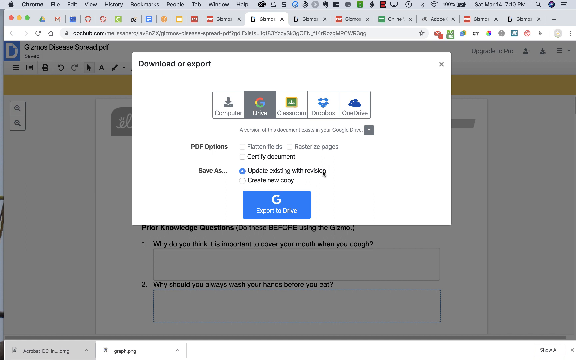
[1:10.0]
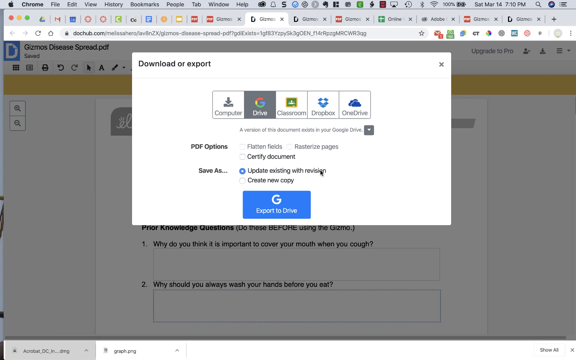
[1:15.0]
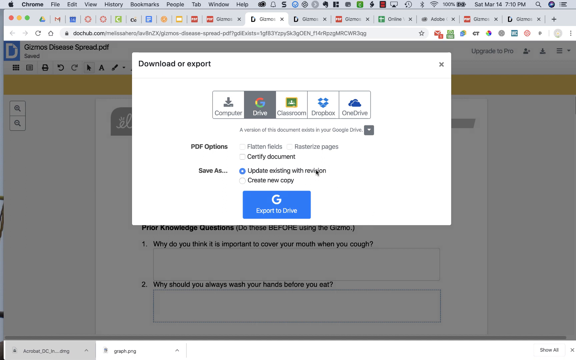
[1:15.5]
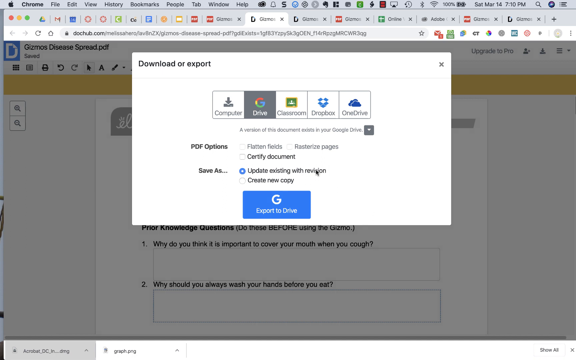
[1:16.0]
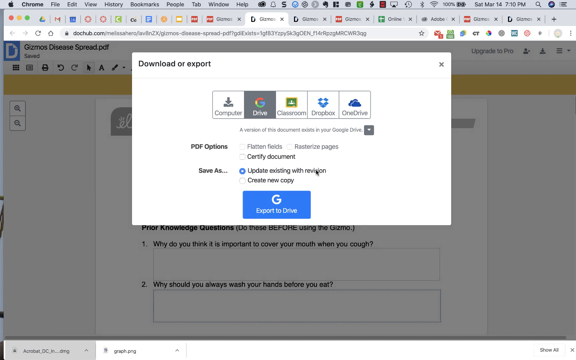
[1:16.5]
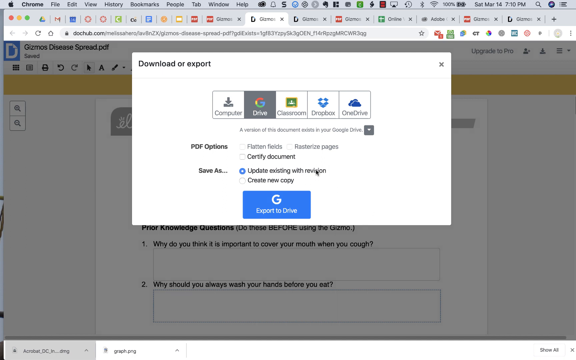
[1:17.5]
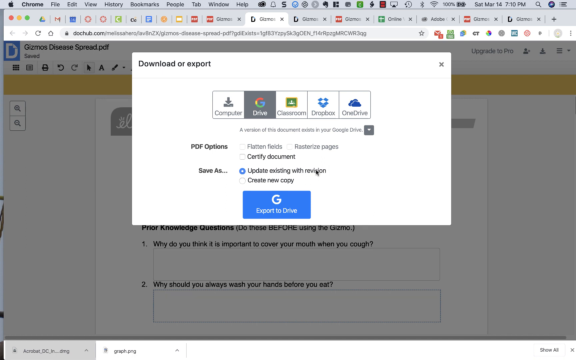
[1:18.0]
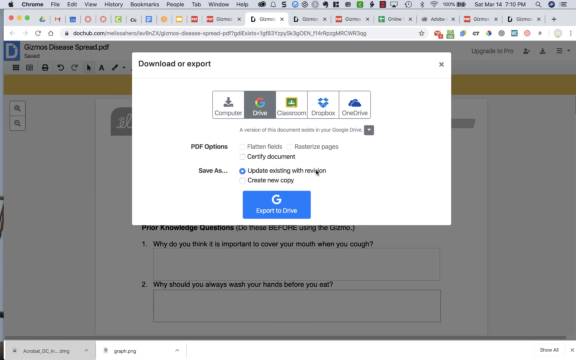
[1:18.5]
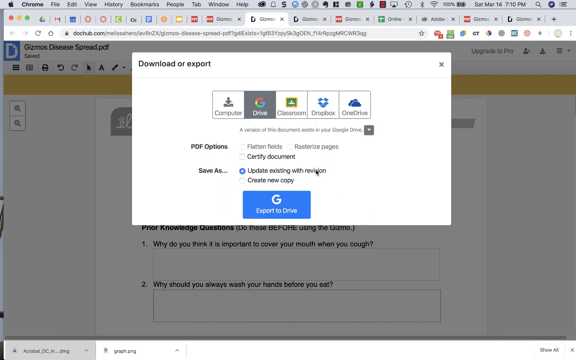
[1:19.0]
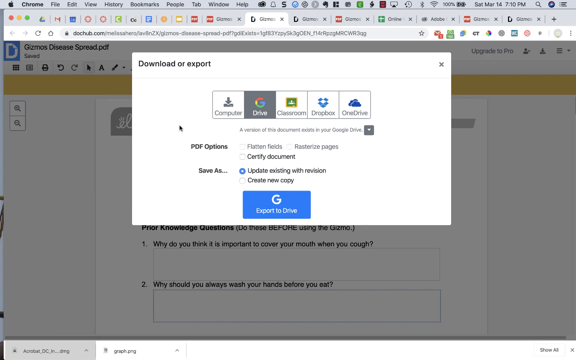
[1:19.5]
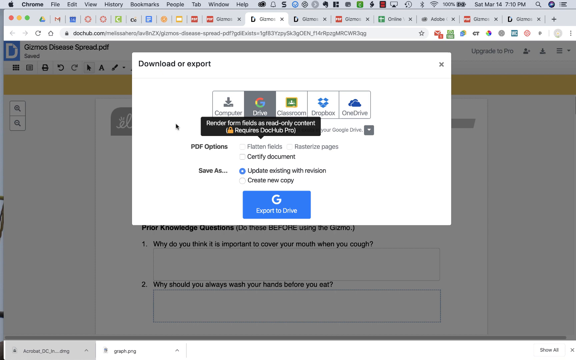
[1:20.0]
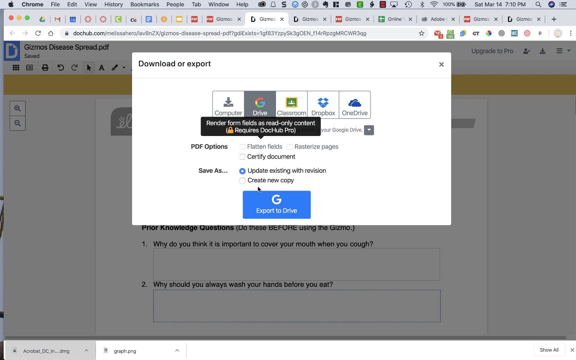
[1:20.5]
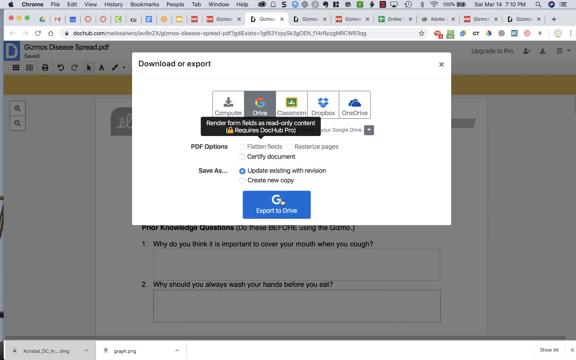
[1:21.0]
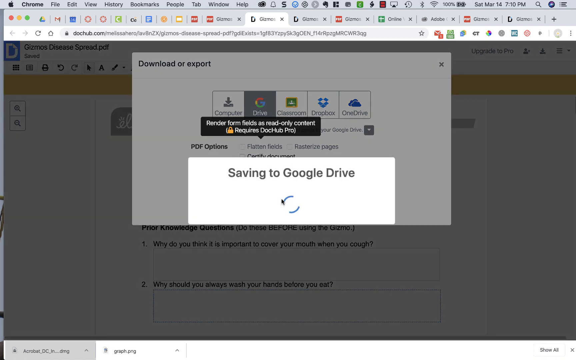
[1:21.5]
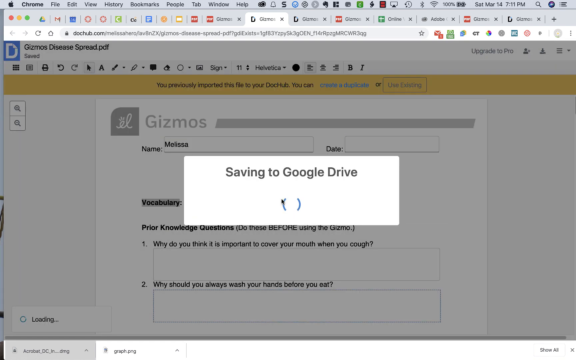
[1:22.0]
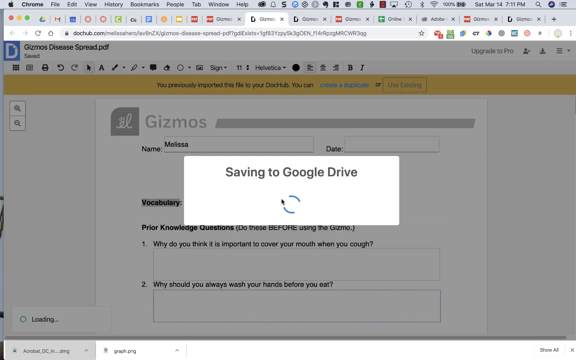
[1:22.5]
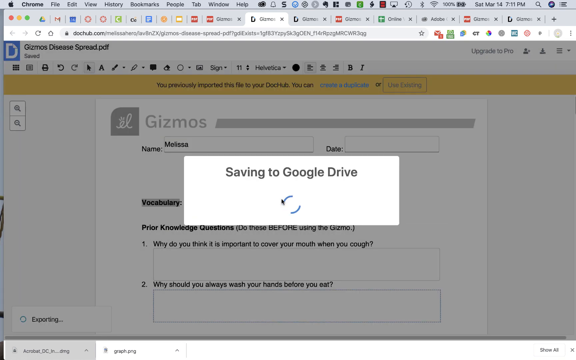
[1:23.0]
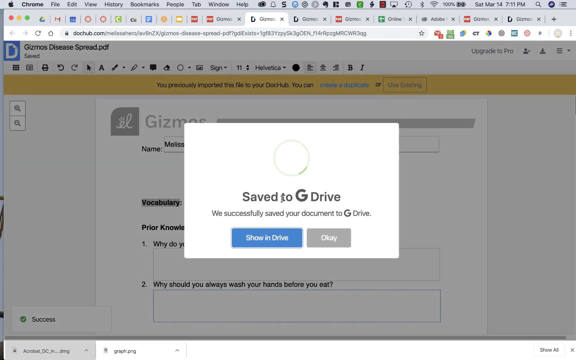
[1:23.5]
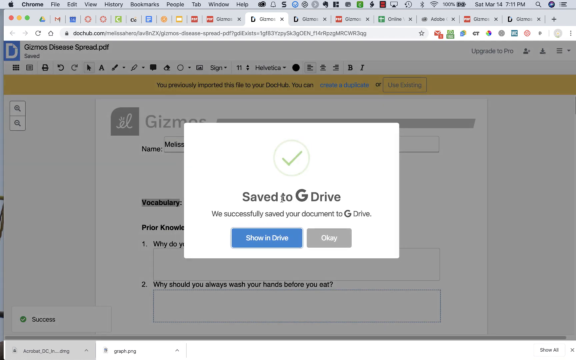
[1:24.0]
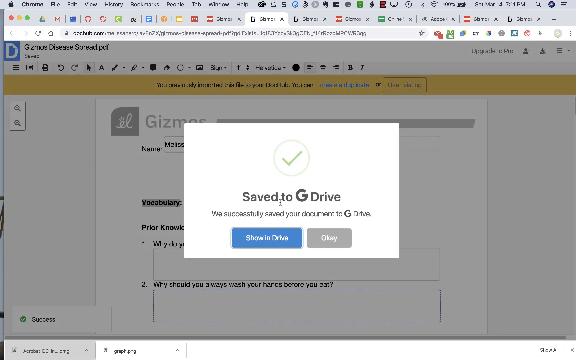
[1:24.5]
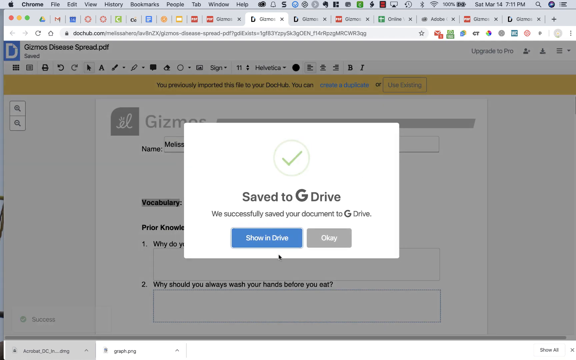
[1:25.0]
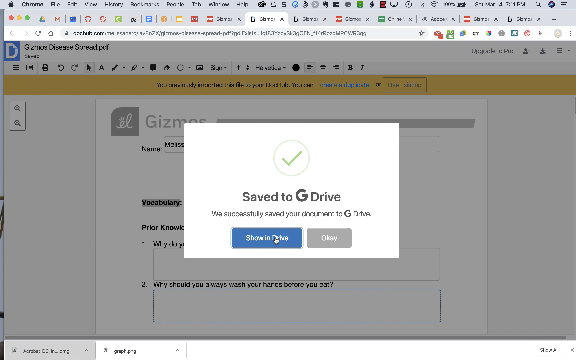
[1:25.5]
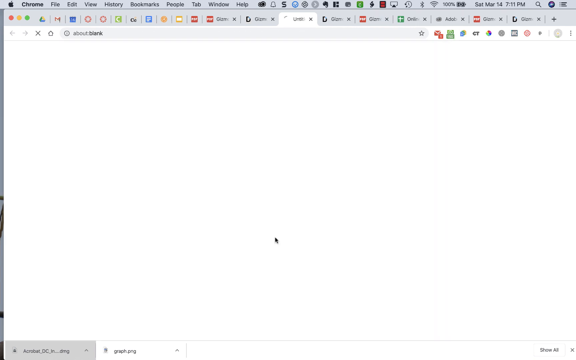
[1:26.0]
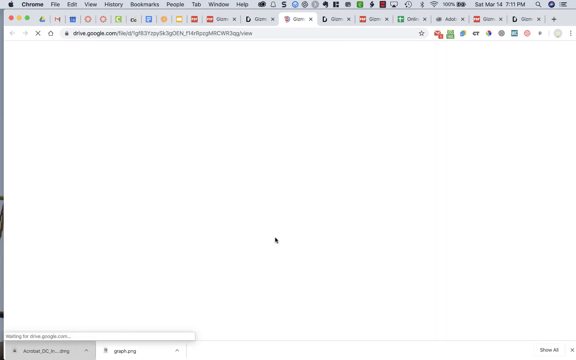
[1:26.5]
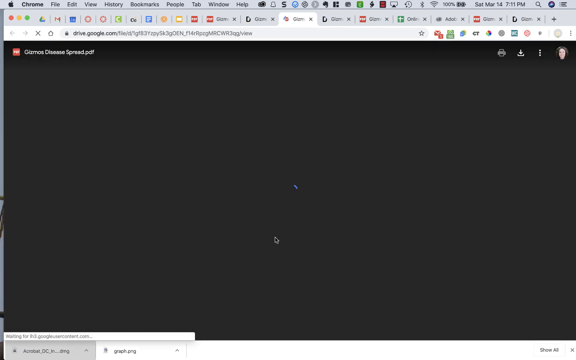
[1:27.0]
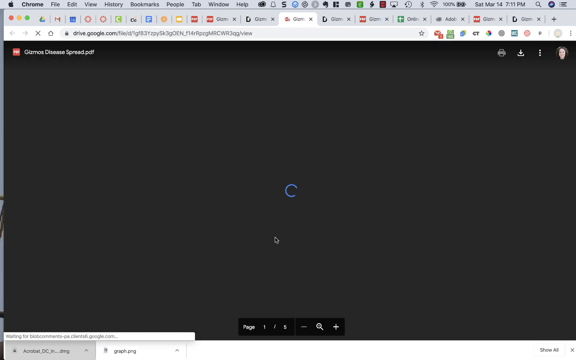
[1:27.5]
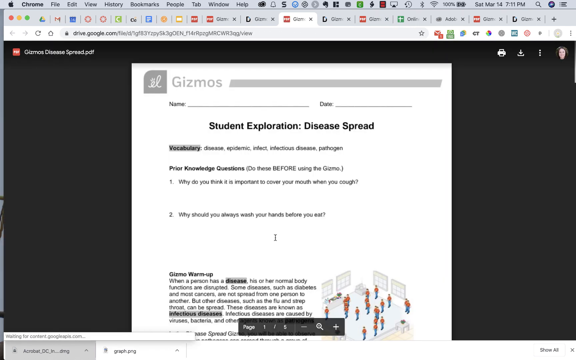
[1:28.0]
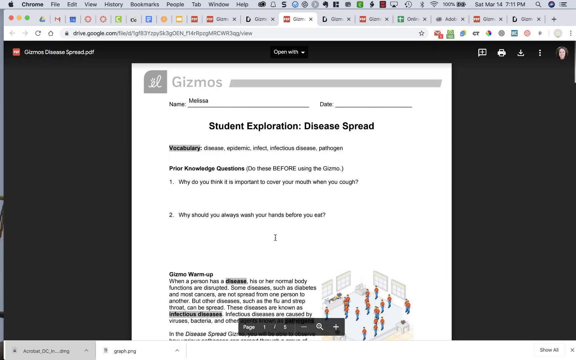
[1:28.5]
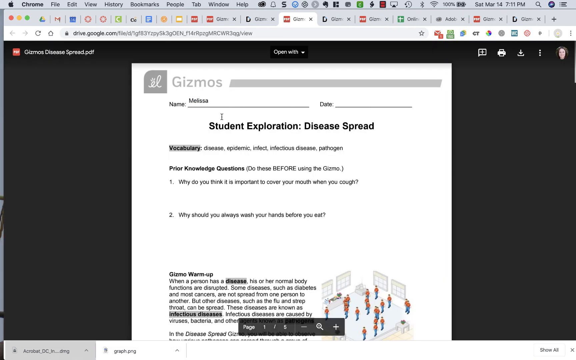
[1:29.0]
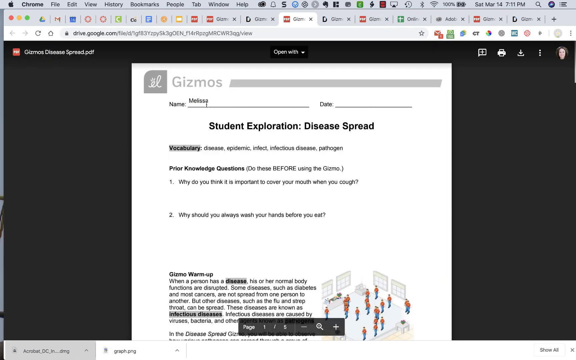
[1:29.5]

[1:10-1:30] On dochub.com, the "Download or Export" screen shows options to download to computer, Drive, Classroom, Dropbox, or OneDrive, and text that says "a version of the document exists in your Google Drive." PDF option settings include "Flatten Fields," "Rasterize Pages," and "Certify Documents." Under "Save As" there are "Update Existing with Revision," which is currently selected, and "Create New Copy," along with an "Export to Drive" button. The user hovers the mouse over that area, and a box pops up saying "Render Form Fields as Read-Only Content Requires DocHub Pro." They move the mouse to "Export to Drive" and click it. A box appears saying "Saving to Google Drive" with a small blue loading symbol, followed by a notification that says "Saved to G Drive. We successfully saved your document to G Drive," with a blue "Show in Drive" button and a gray "OK" button. The user clicks "Show in Drive," which opens a new tab showing gizmosdiseasespread.pdf with "Melissa" in the top name field.